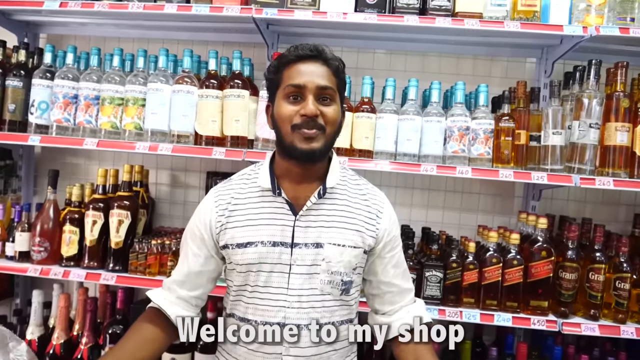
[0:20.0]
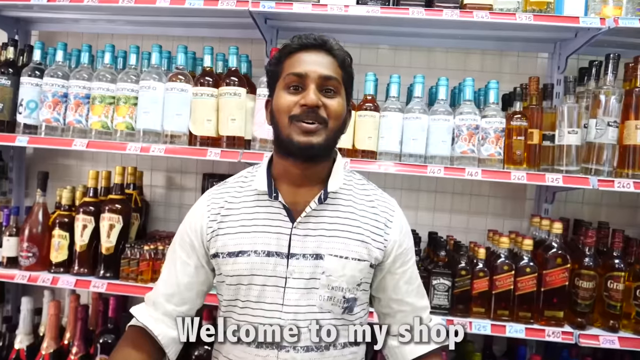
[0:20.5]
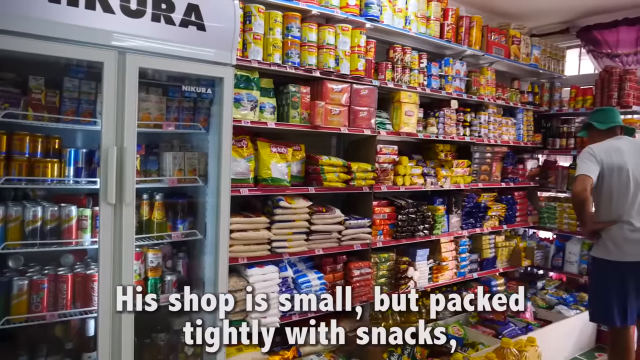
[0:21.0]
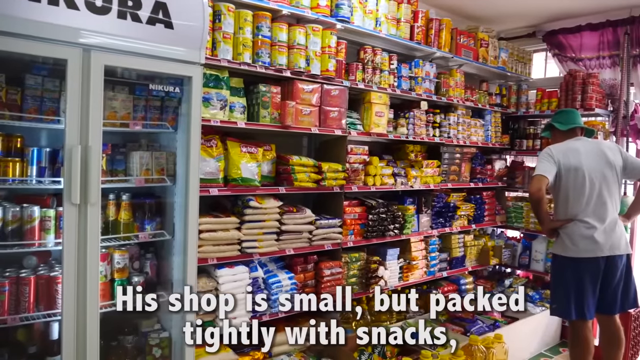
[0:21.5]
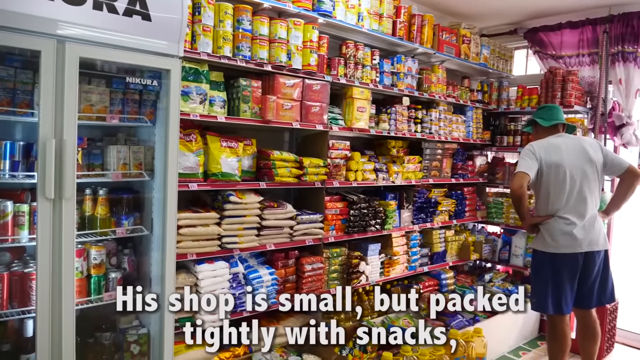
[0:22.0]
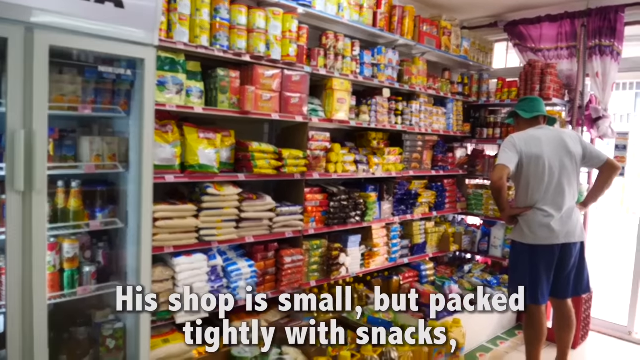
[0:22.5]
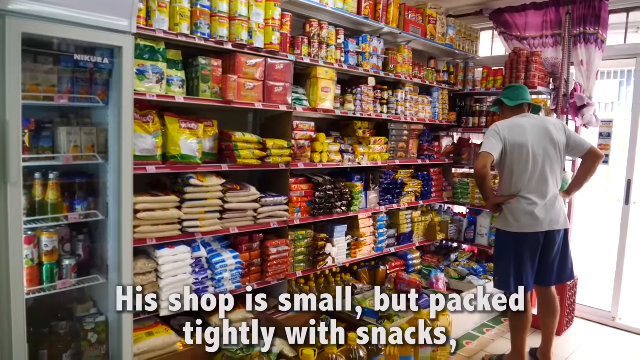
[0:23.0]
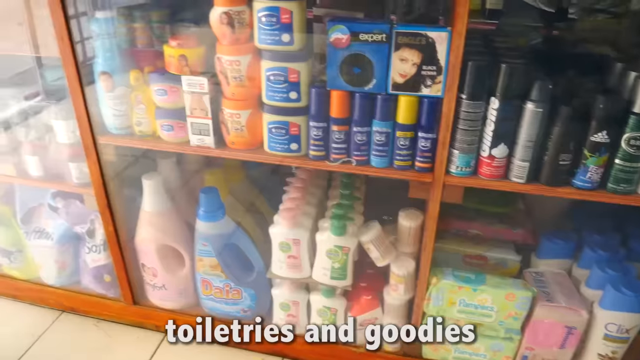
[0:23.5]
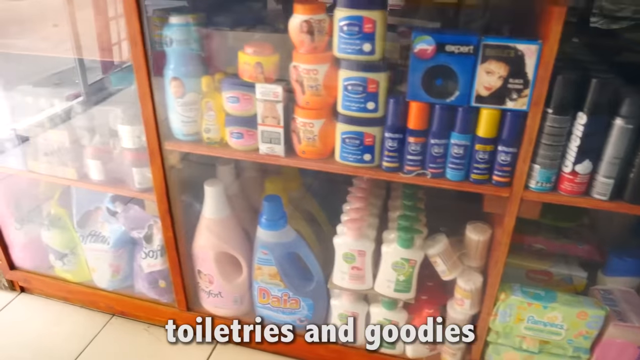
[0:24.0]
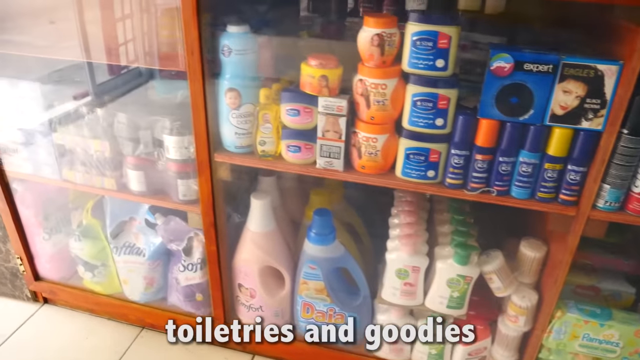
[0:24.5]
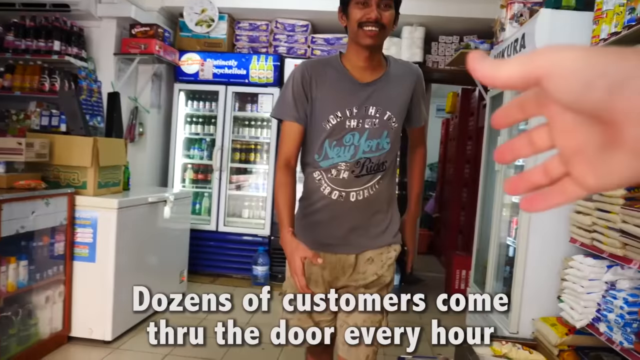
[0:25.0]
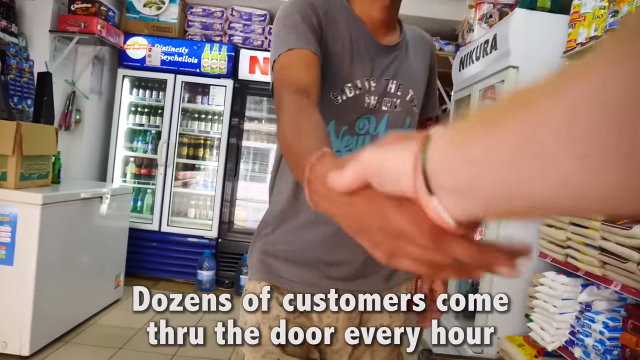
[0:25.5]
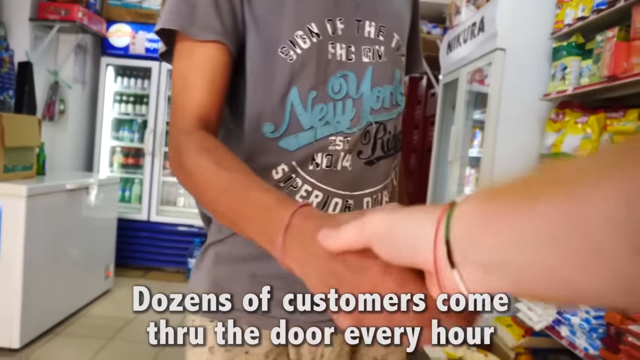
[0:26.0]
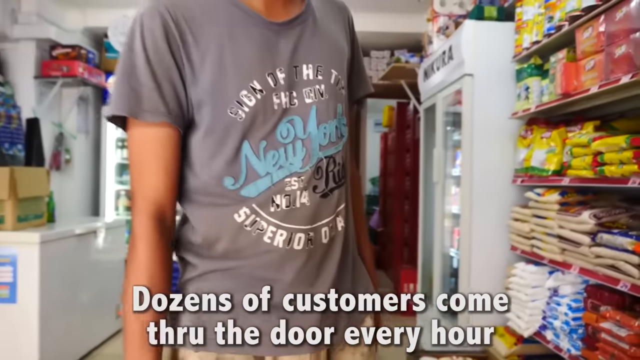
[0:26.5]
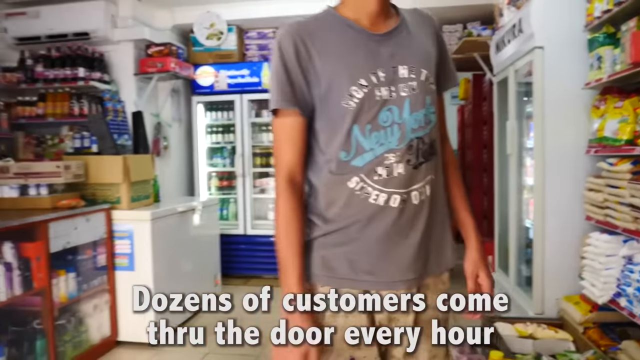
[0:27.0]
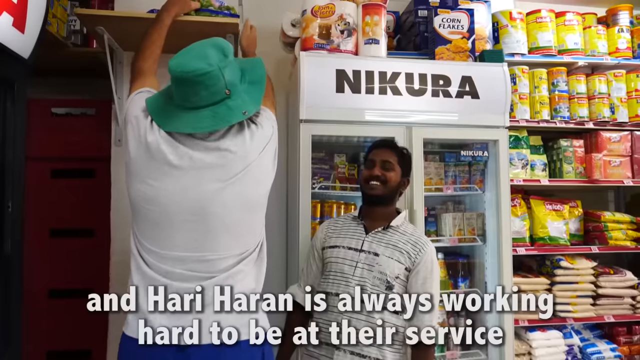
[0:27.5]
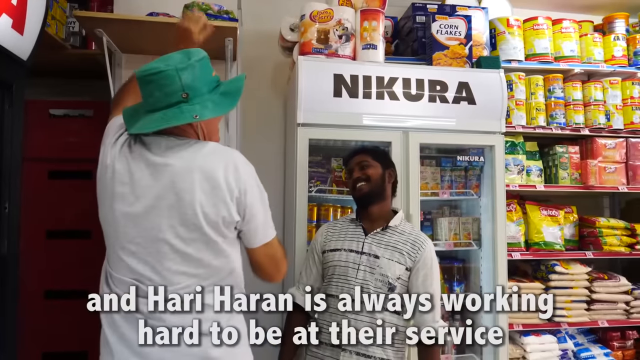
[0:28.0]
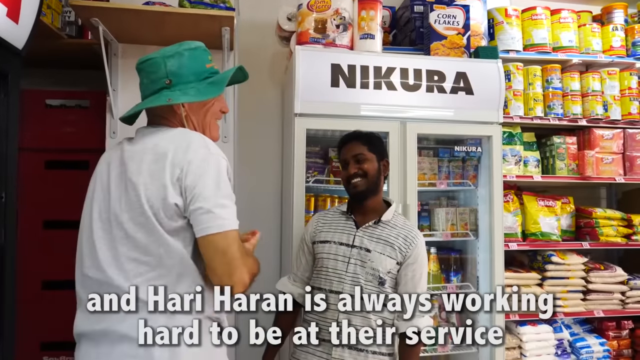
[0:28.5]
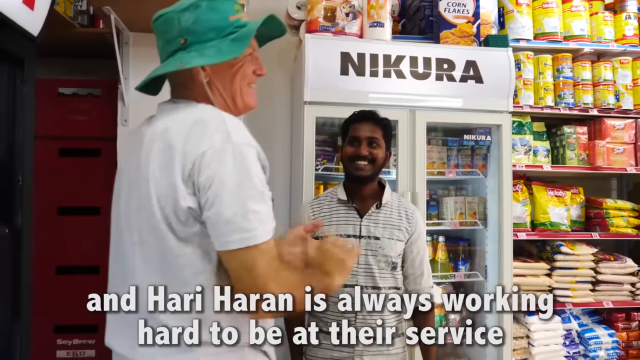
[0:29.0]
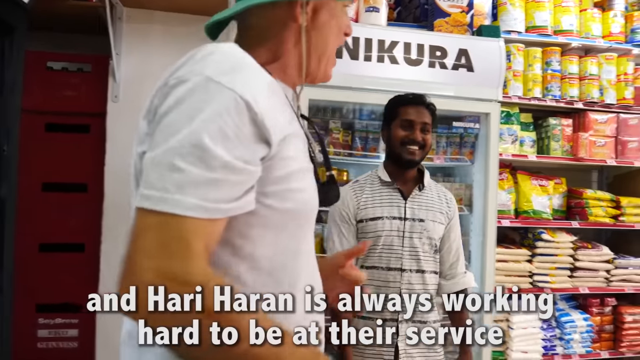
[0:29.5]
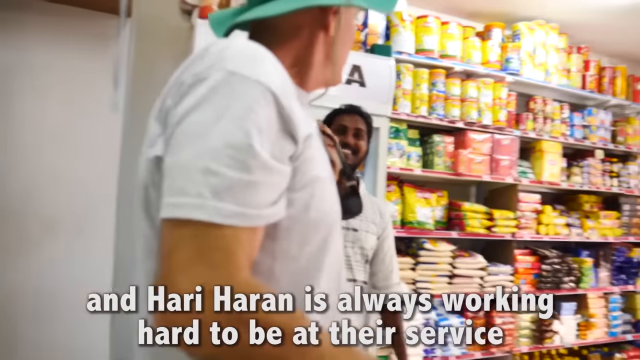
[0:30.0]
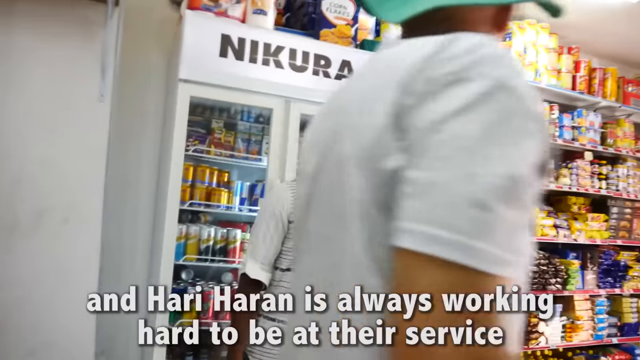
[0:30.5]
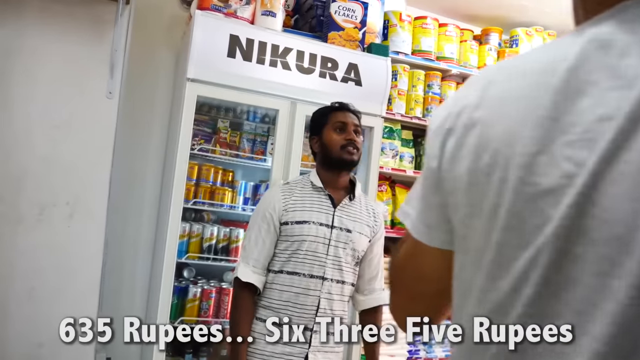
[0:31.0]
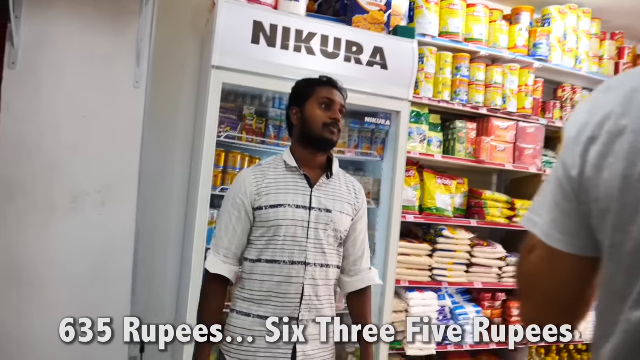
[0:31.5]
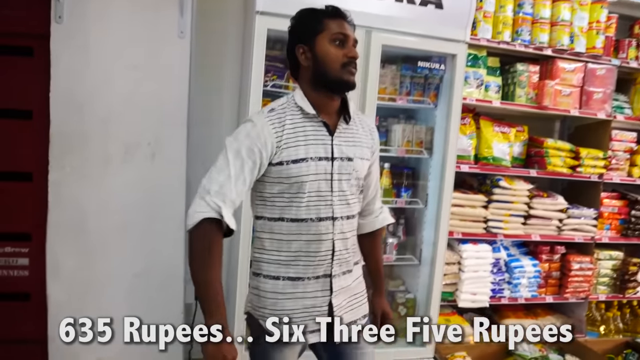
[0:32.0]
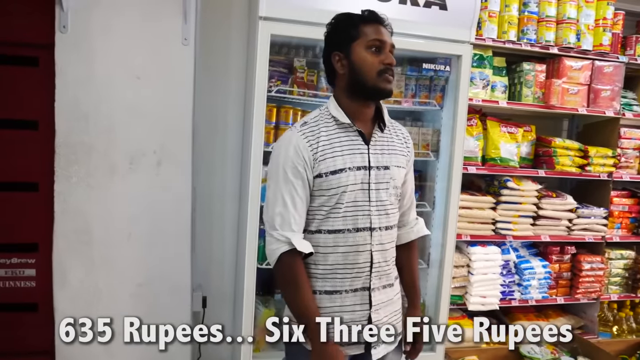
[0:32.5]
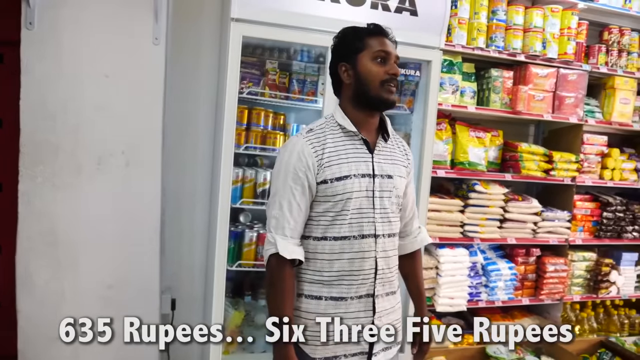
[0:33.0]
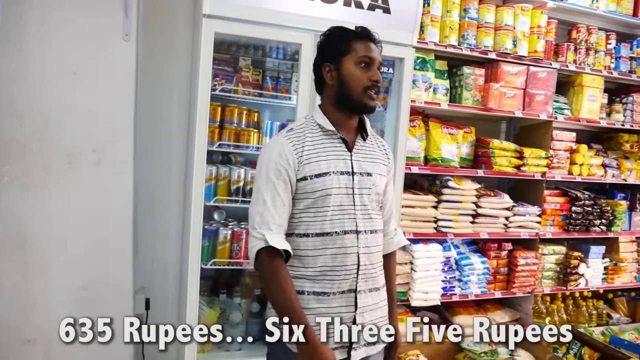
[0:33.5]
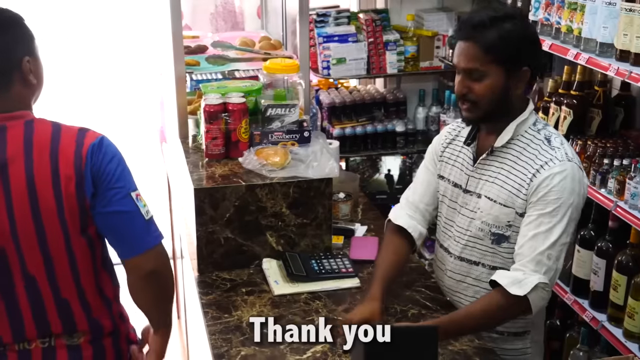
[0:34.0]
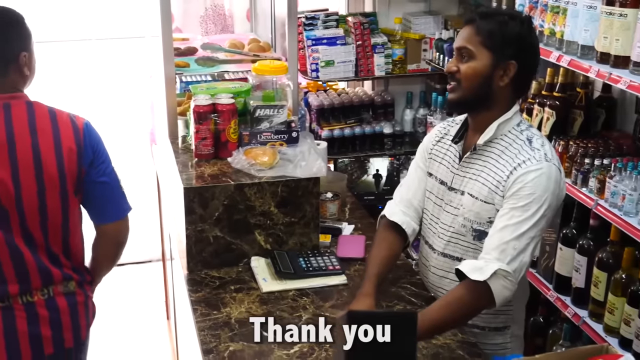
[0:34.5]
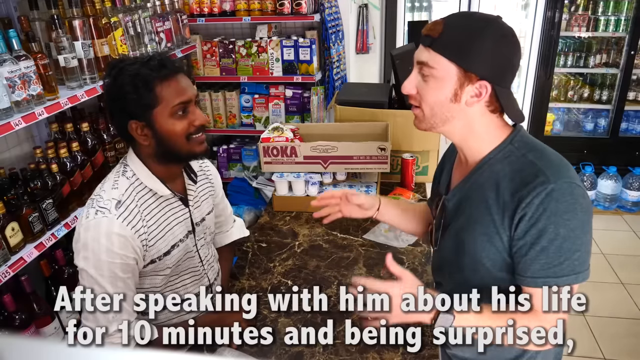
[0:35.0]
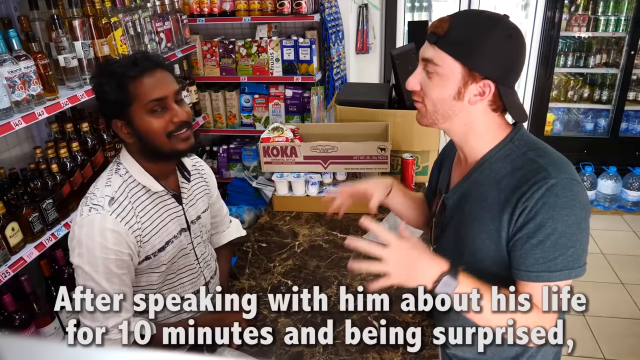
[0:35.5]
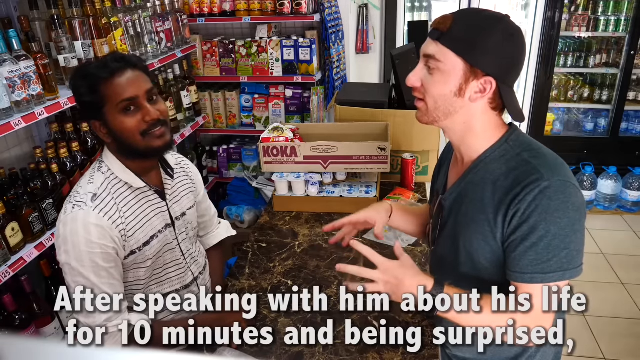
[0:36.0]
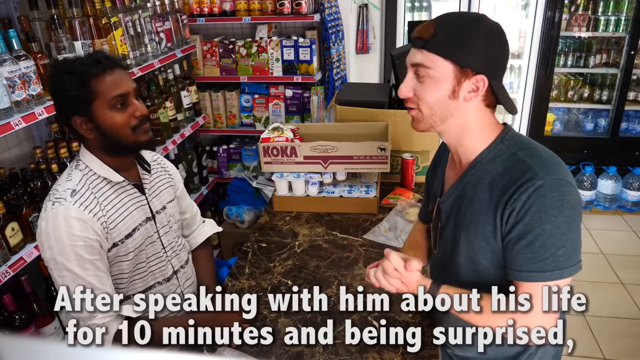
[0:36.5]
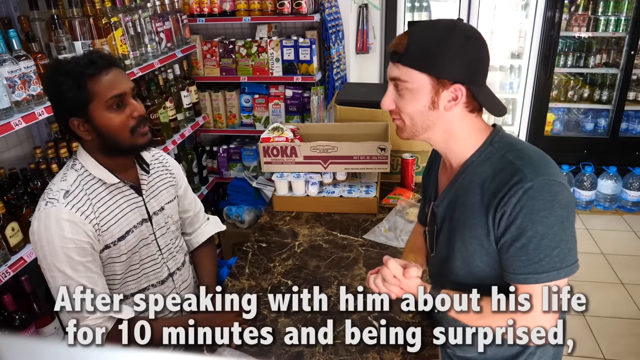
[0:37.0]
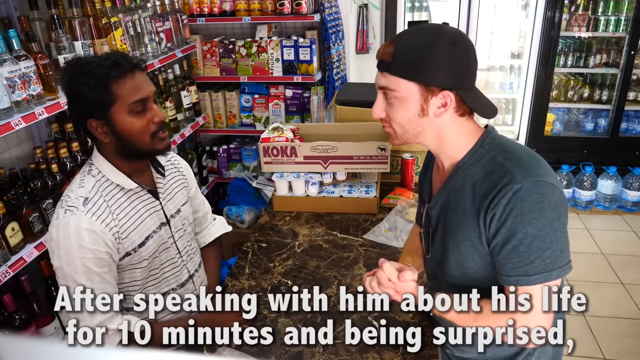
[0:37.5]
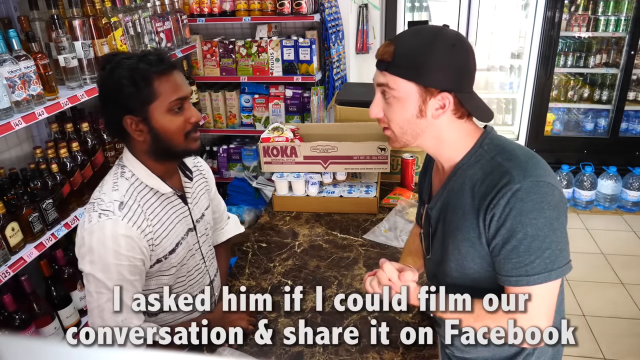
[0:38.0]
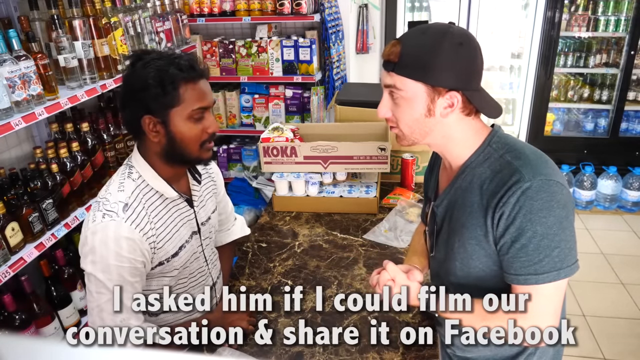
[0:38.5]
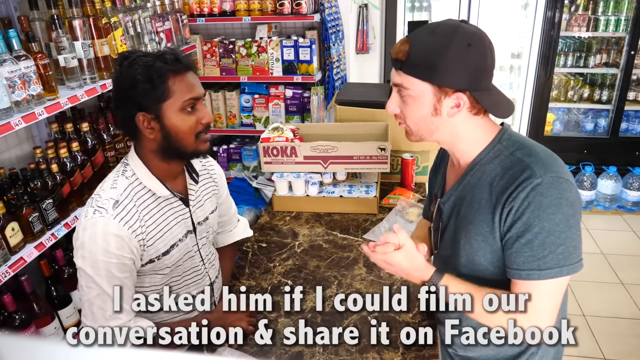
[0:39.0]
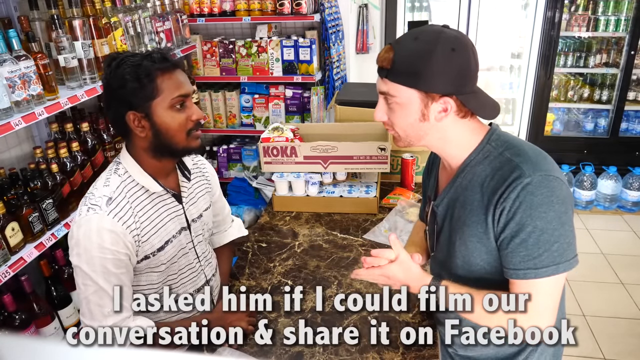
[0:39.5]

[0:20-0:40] The Indian man stands in a shop of which he seems to be the owner. Besides the alcohol where he stands, another part of the shop shows grocery products, so it seems to be a big supermarket rather than only an alcohol shop. A man stands in front of shelves holding many grocery products of various brands; he wears a white t-shirt, a white hat and navy blue shorts. To his left is a fridge containing different types of juices, colas and some yogurts. A man enters the shop, and the two shake hands in greeting.